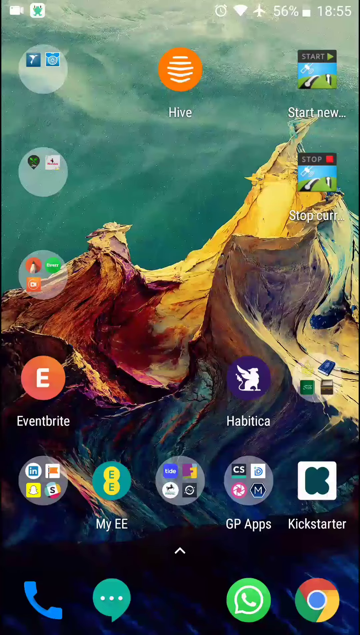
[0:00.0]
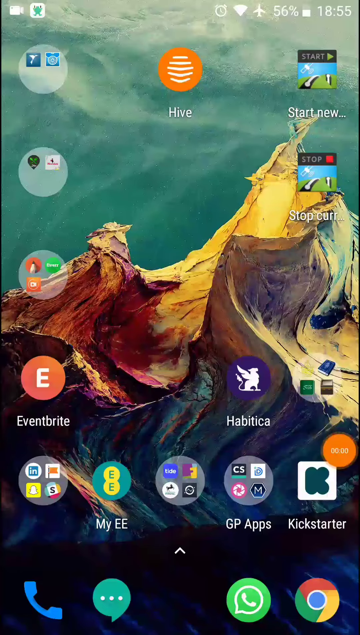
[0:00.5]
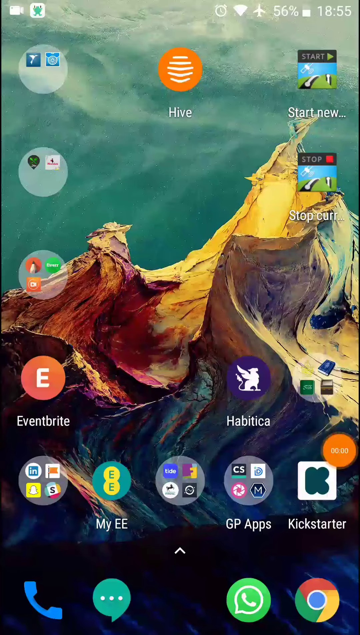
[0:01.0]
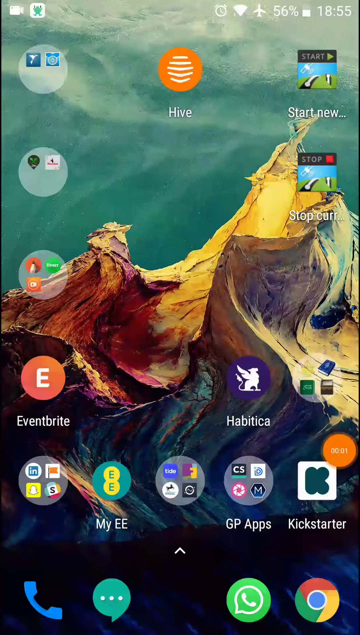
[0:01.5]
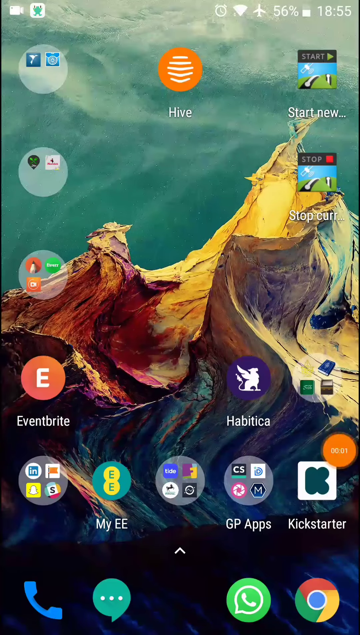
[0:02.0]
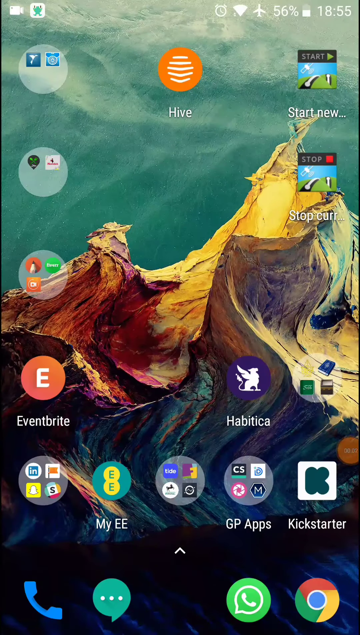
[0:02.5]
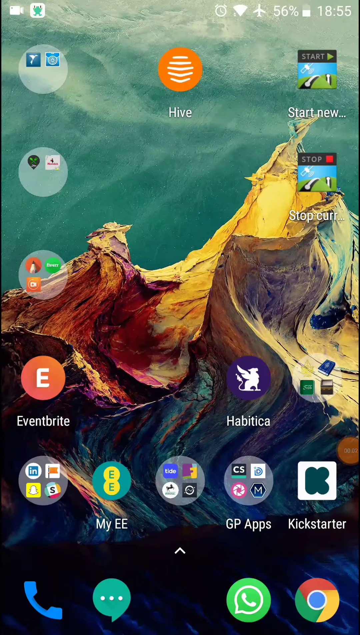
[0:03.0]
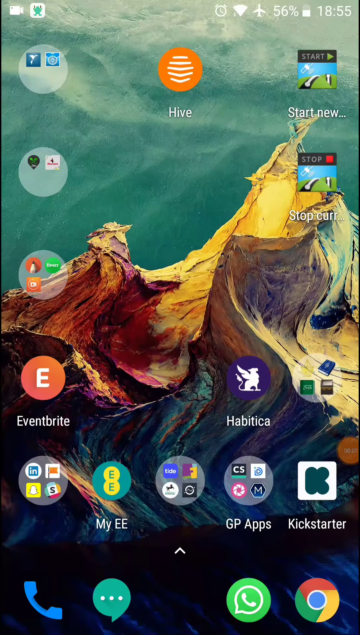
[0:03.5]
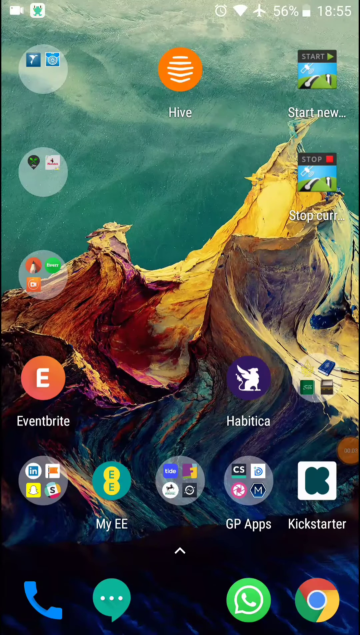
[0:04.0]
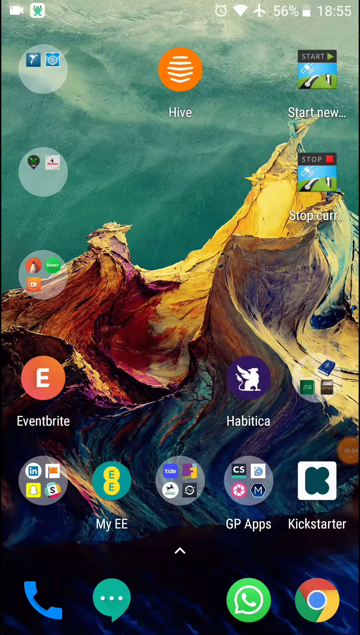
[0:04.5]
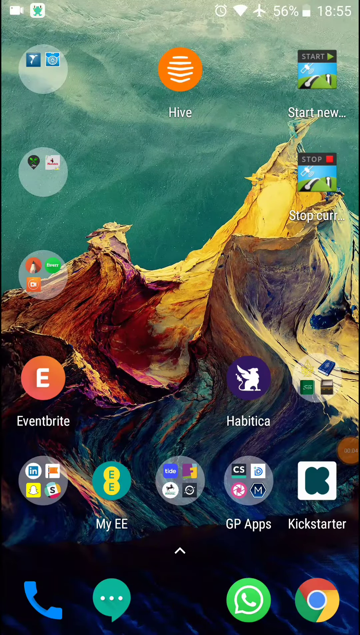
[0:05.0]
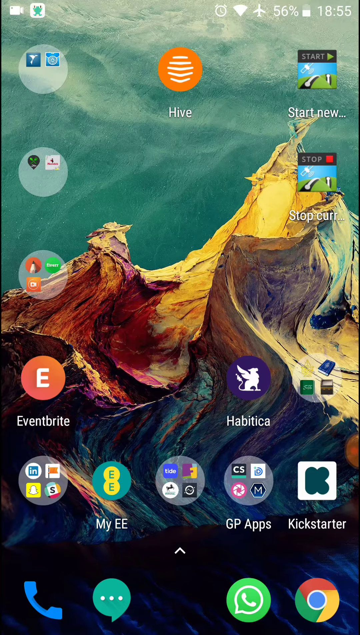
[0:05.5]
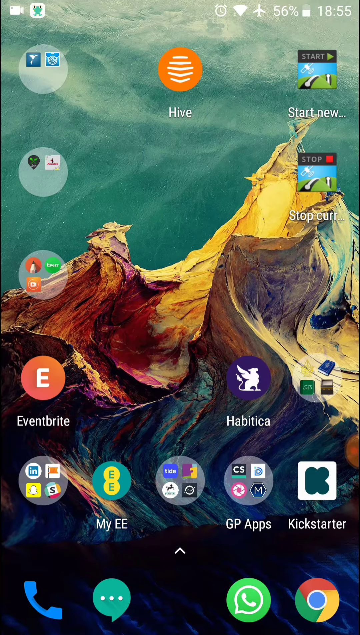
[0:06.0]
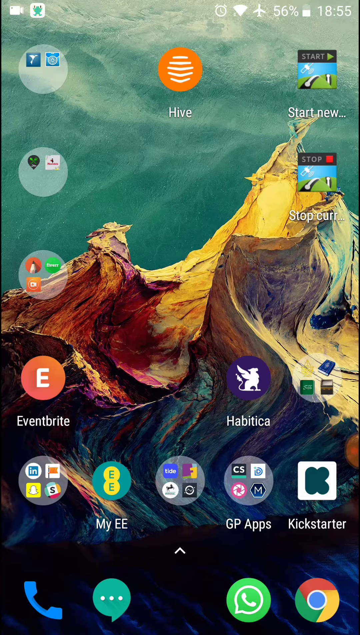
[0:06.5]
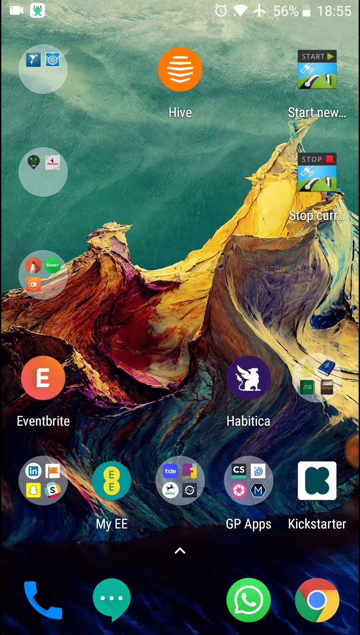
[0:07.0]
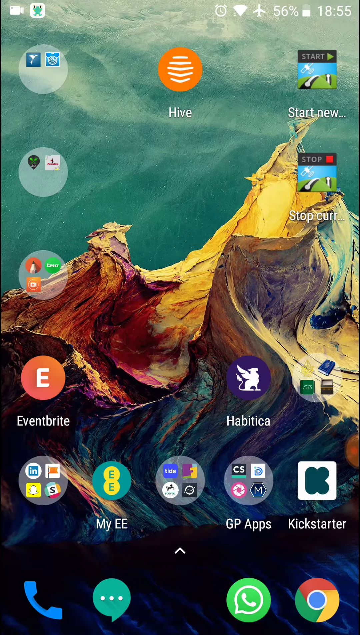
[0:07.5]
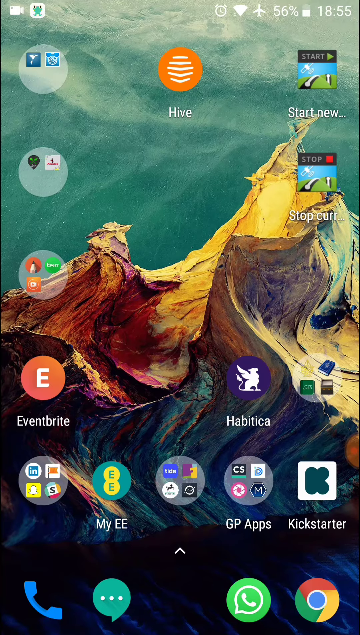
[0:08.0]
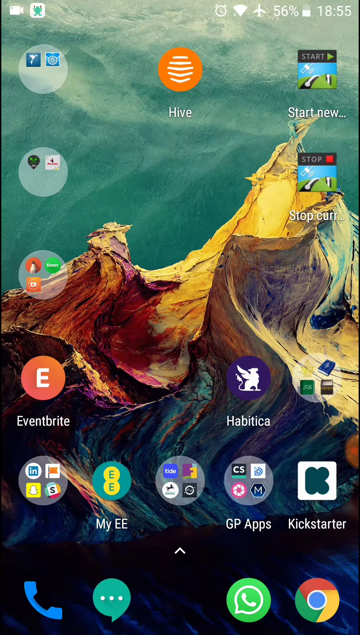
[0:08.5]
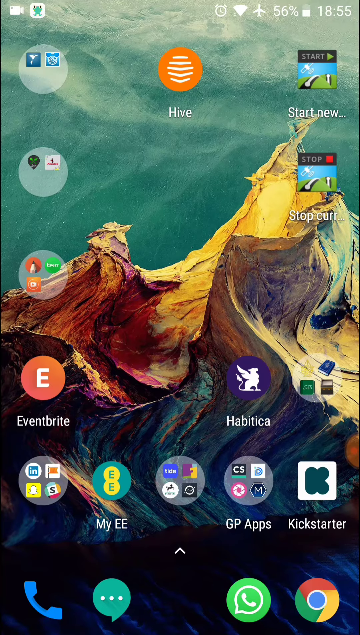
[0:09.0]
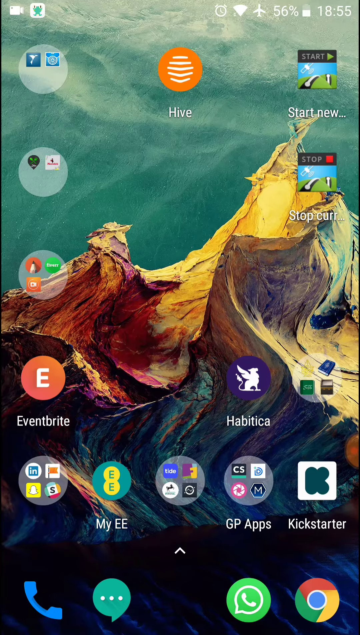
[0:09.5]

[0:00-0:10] A phone's home page is shown in portrait view. In the top right corner the time reads 18:55 and the battery is at 56%. A small airplane symbol in the top right corner shows the phone is in airplane mode, and a Wi-Fi signal is also visible as on. In the top left corner a video camcorder symbol indicates that the phone is being screen recorded. The home screen background appears to be an oil painting of mountains in very colorful blue, purple, red, orange and yellow, with what looks like a light blue or turquoise sky above the mountains. In the bottom right corner is a Google Chrome button; to its left is a phone button that looks like an app such as WhatsApp. In the bottom left corner is the phone app, a blue telephone symbol. Various apps are on the home page, including ones called Hive, Kickstarter, My EE and Eventbrite.